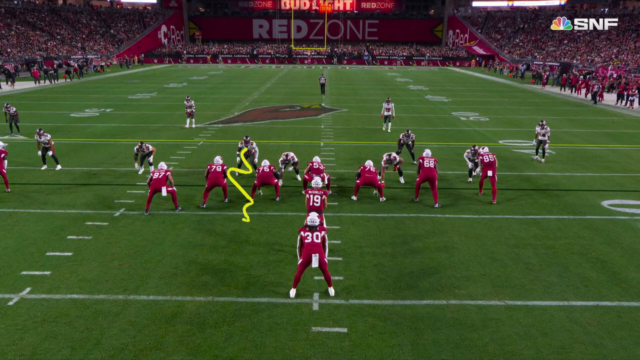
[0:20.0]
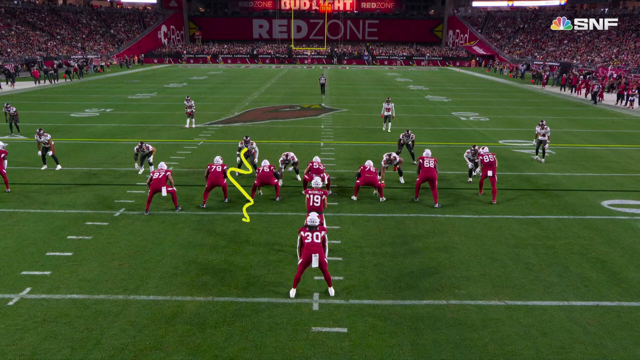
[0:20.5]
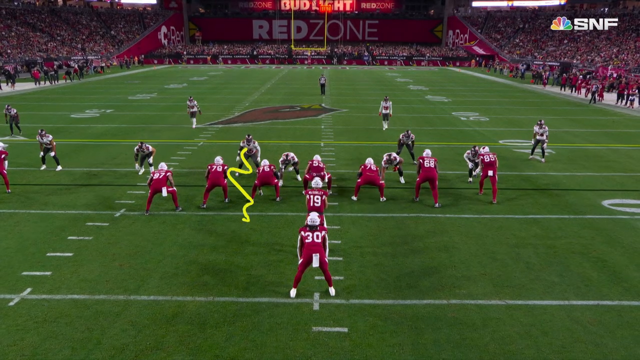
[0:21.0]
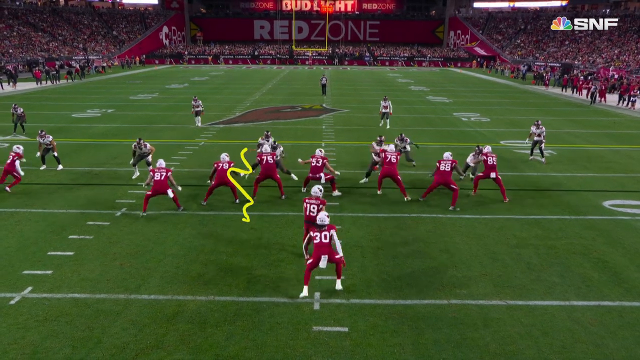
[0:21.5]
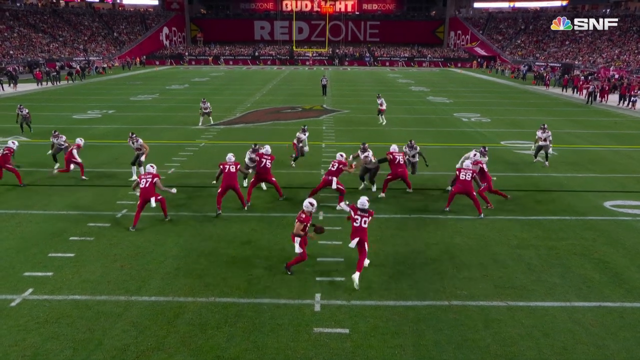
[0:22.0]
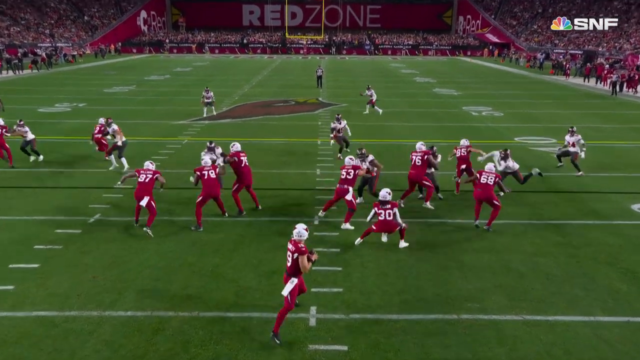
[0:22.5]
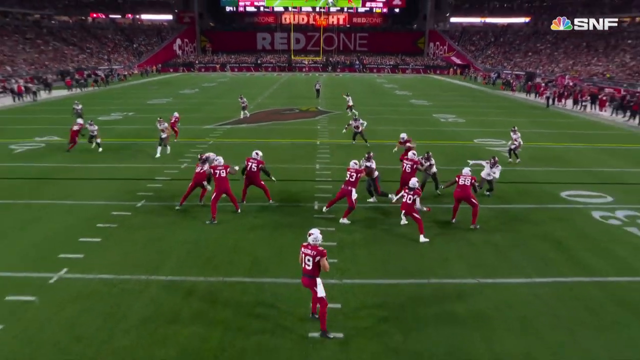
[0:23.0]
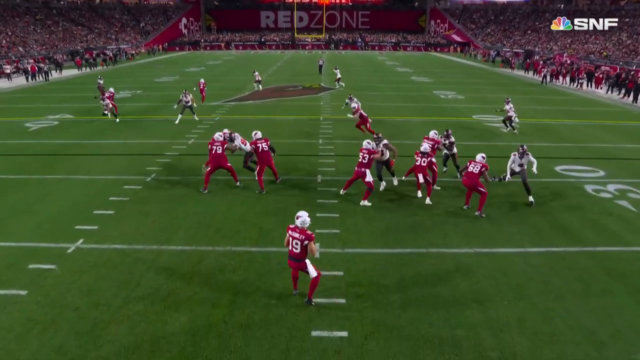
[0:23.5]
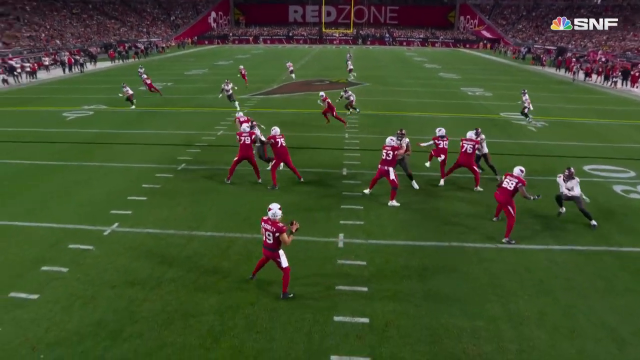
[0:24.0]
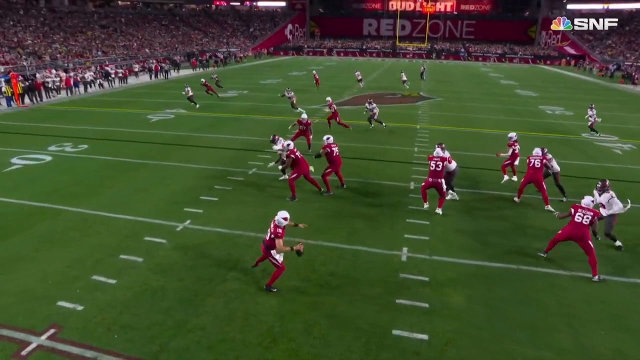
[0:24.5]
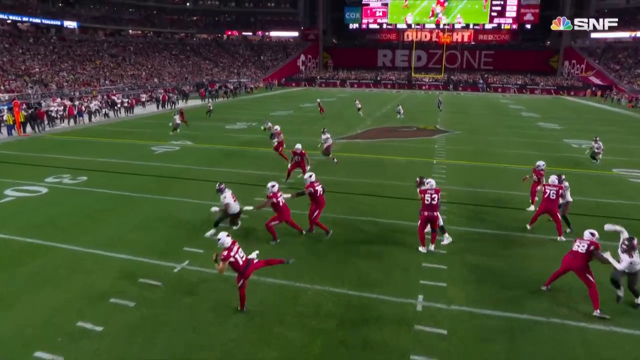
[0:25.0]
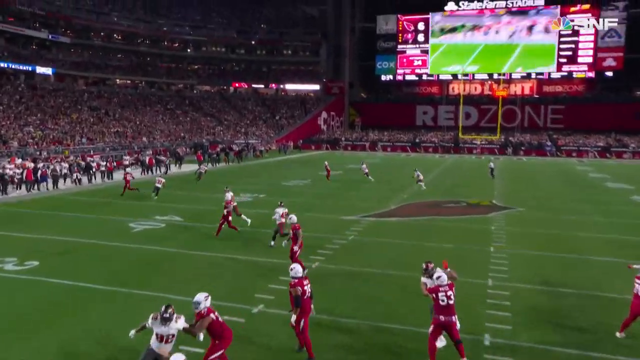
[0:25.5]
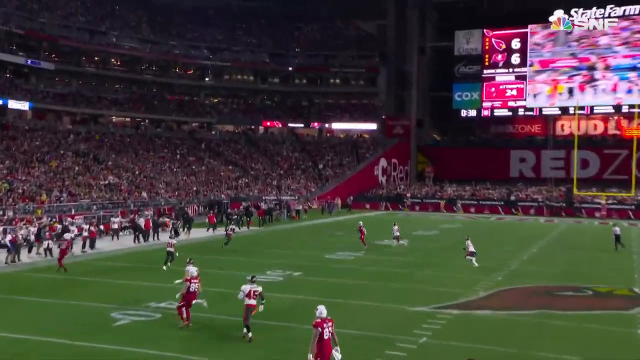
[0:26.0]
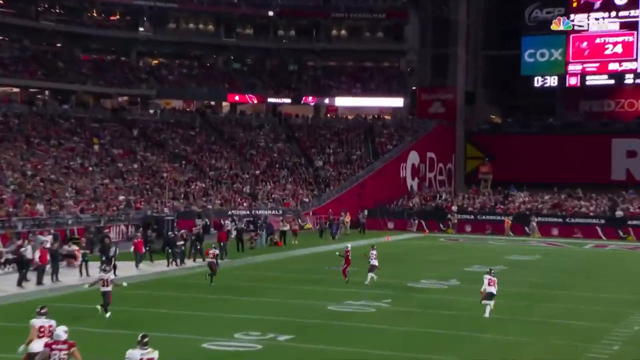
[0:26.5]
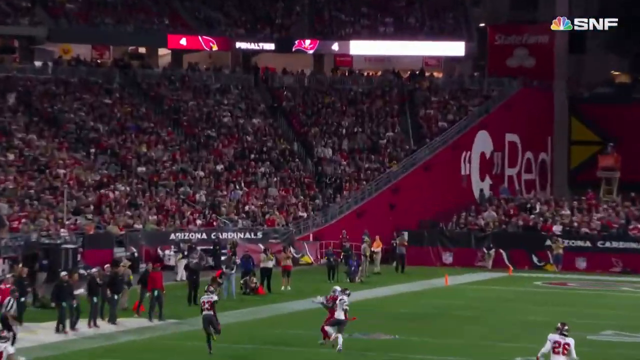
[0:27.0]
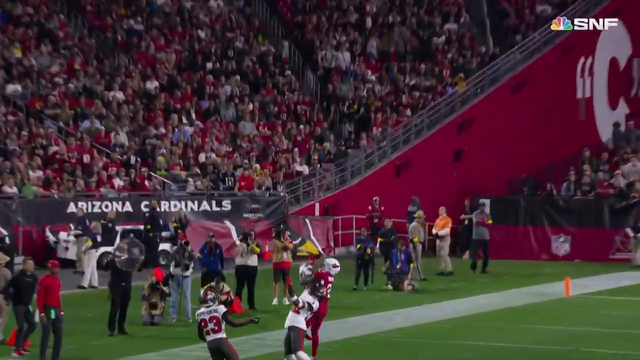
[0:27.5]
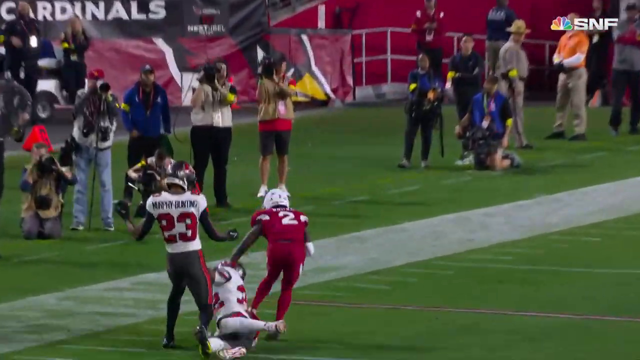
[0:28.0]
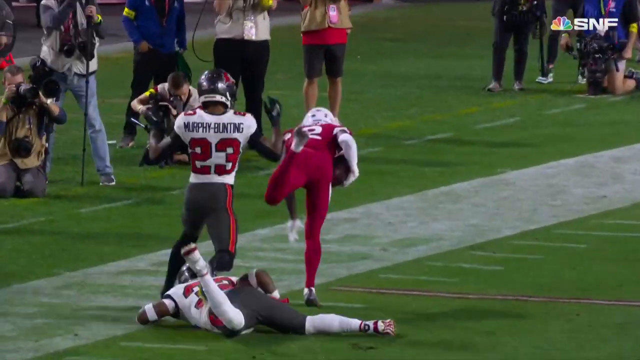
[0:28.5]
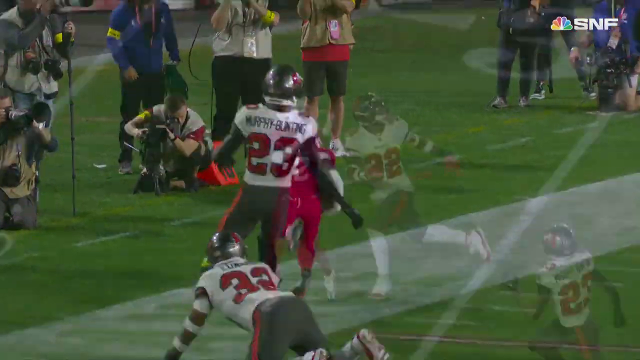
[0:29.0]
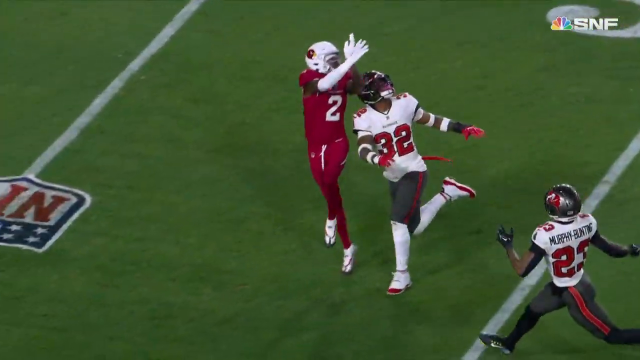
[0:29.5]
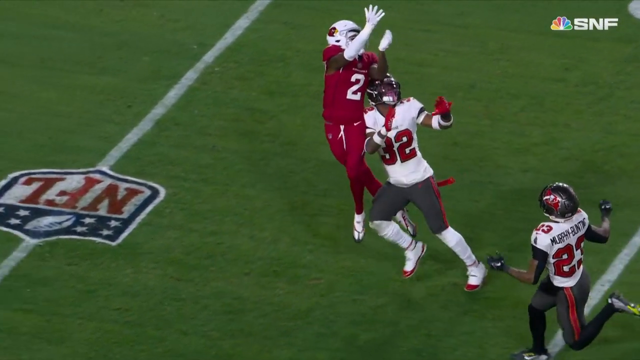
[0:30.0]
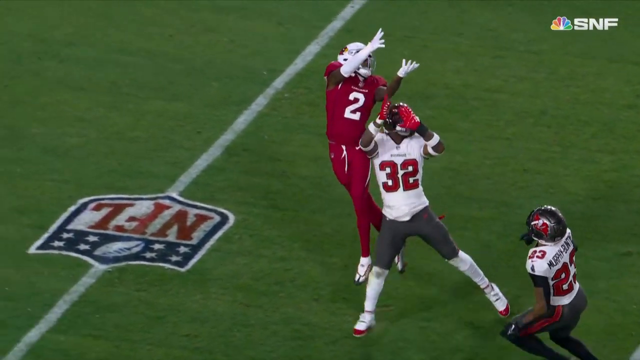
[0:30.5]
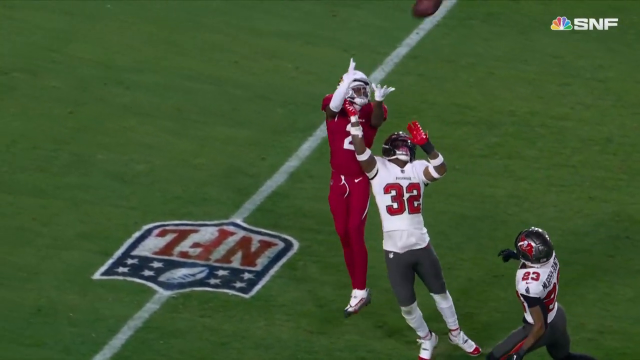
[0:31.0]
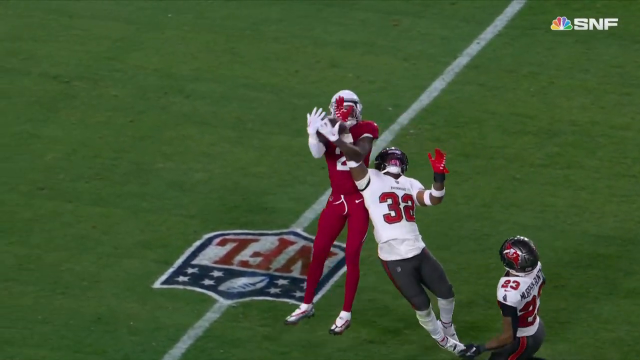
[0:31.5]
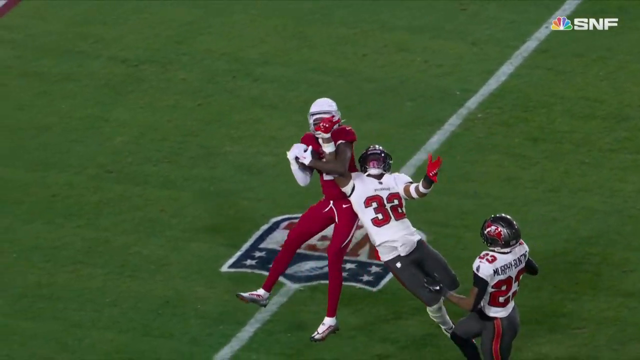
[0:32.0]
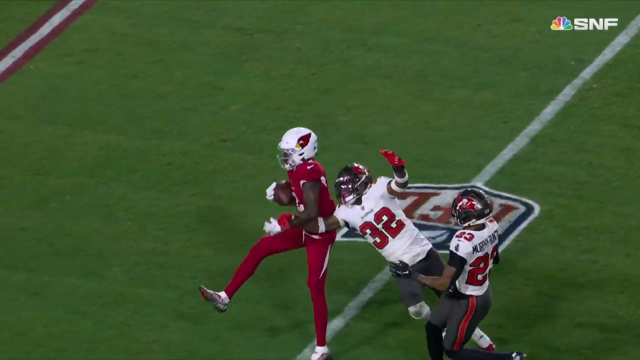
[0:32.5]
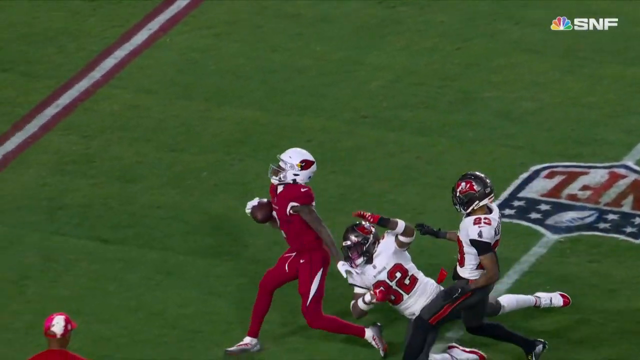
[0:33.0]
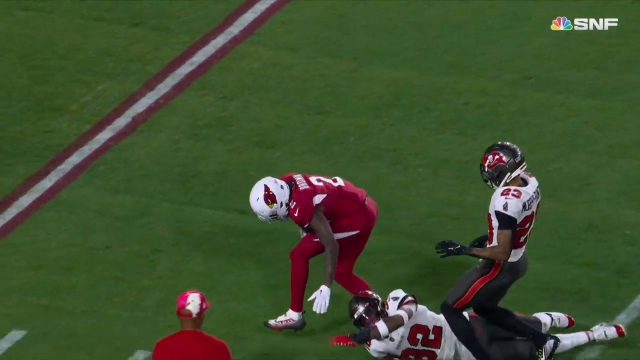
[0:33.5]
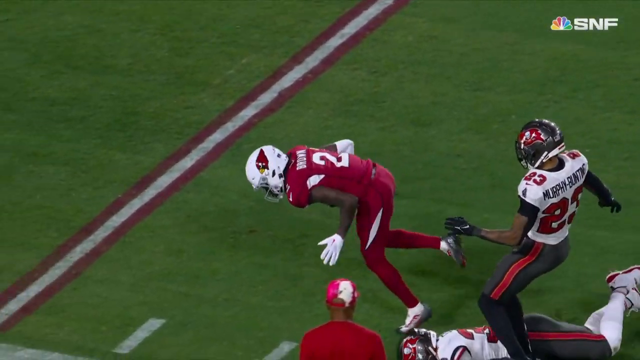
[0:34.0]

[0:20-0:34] The football match between Tampa Bay and Arizona is at 6 to 6 with 50 seconds left on the clock; the red team has possession and it is second and eight. A different view of the play shows, in slightly slow motion, the huge throw succeeding and a touchdown being scored. In this view it kind of looks like the team did not even feint the run. The player in red, from the bird team, is covered and the defenders are doing their job, but he jumps up higher than them, catches the ball, completes the pass and scores the touchdown.